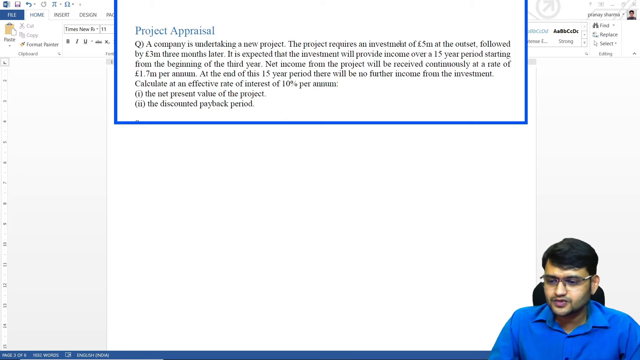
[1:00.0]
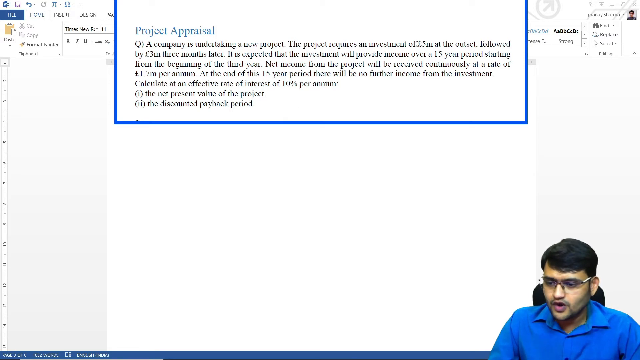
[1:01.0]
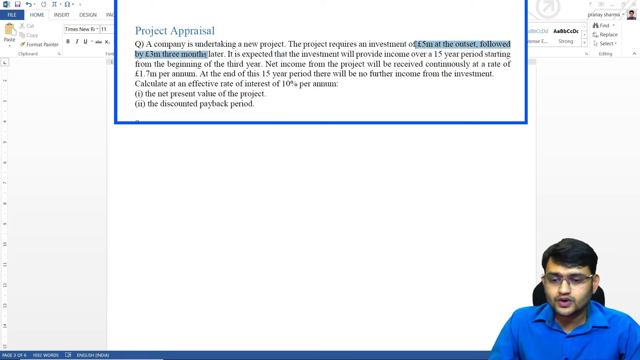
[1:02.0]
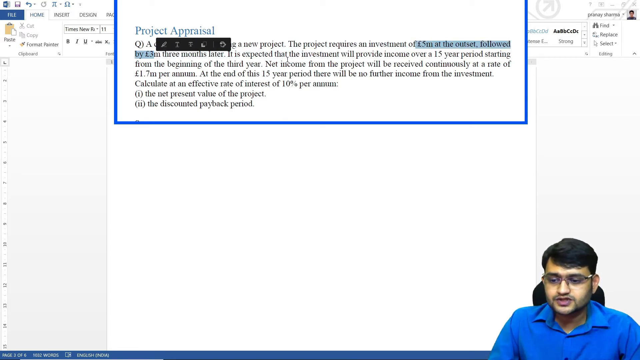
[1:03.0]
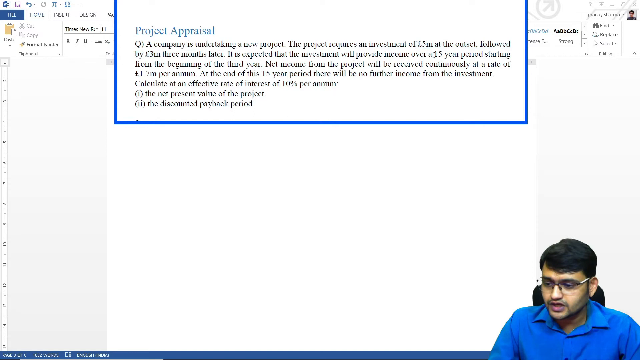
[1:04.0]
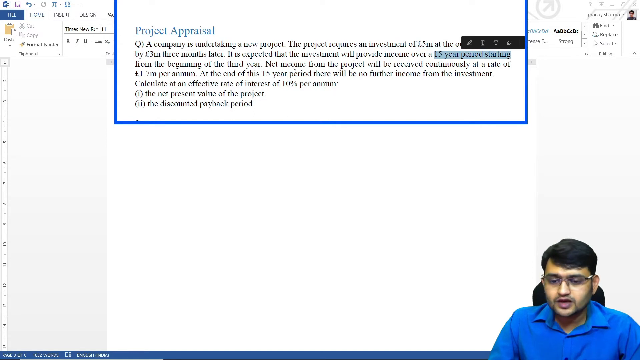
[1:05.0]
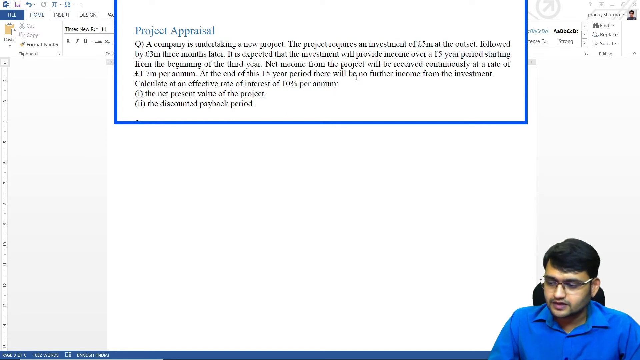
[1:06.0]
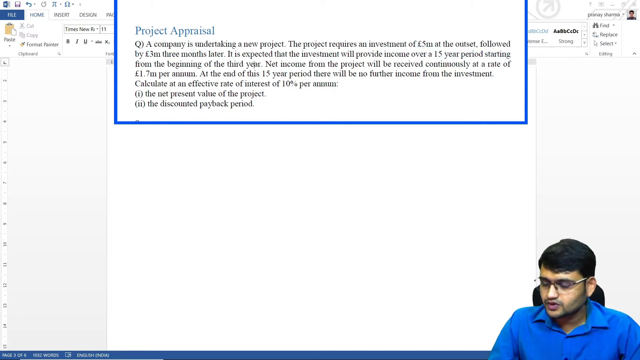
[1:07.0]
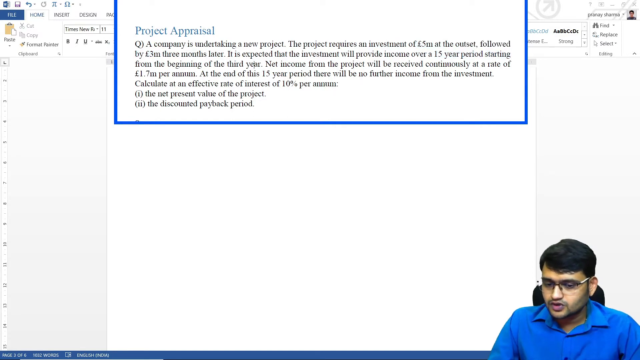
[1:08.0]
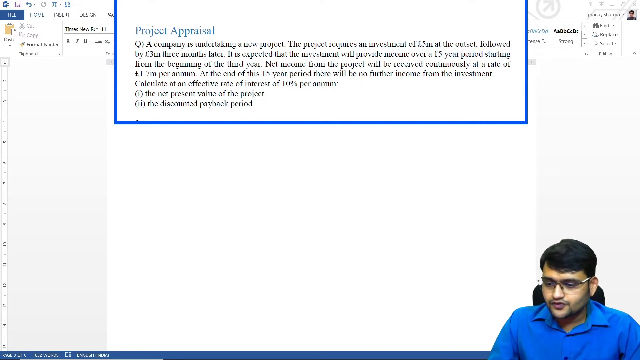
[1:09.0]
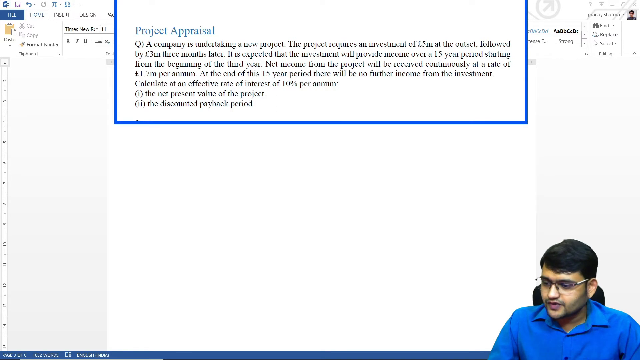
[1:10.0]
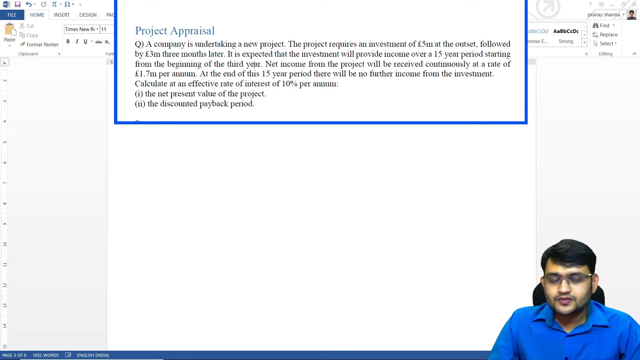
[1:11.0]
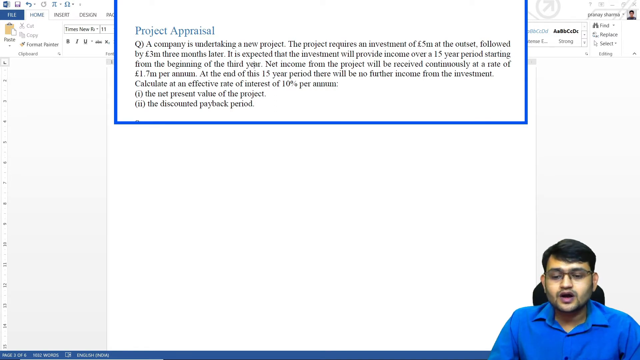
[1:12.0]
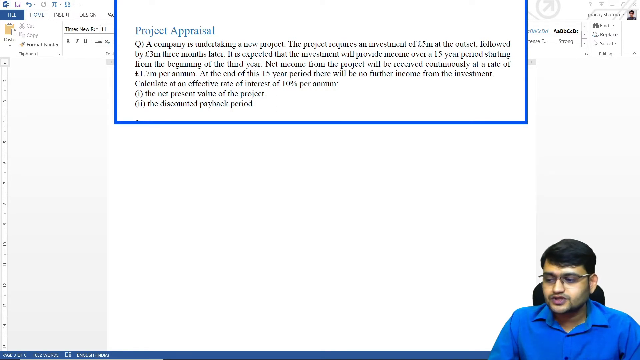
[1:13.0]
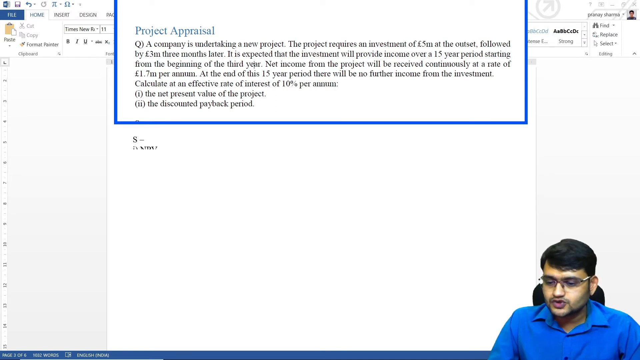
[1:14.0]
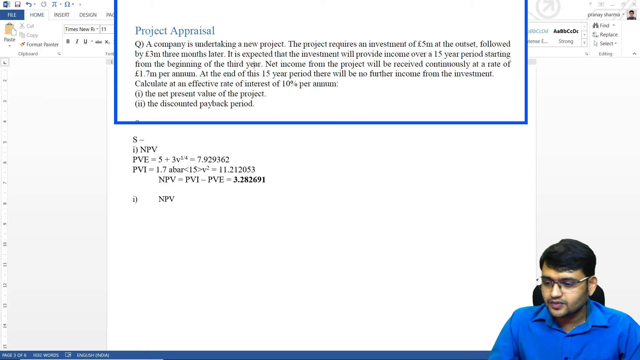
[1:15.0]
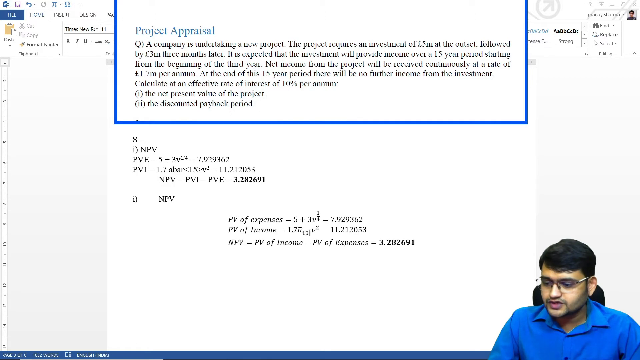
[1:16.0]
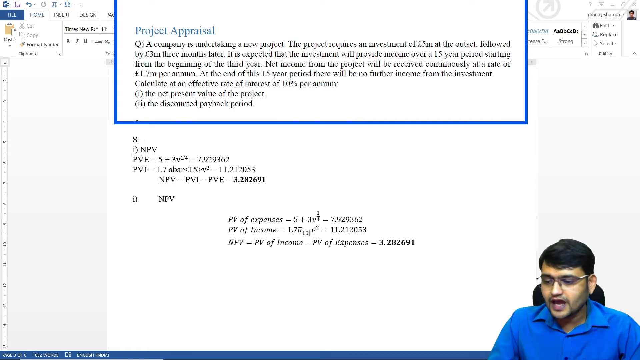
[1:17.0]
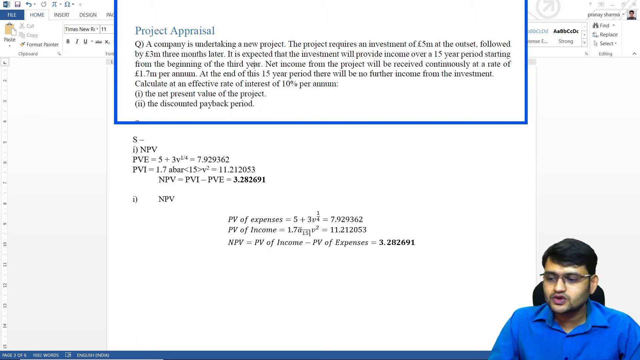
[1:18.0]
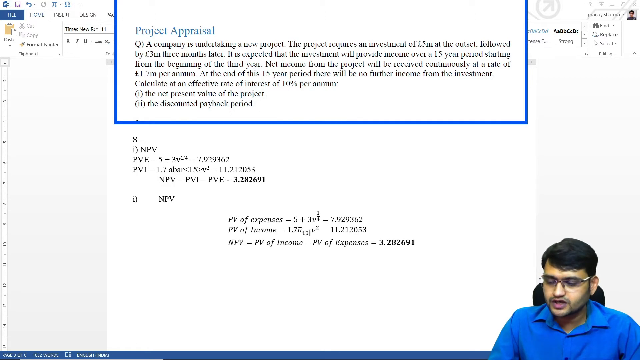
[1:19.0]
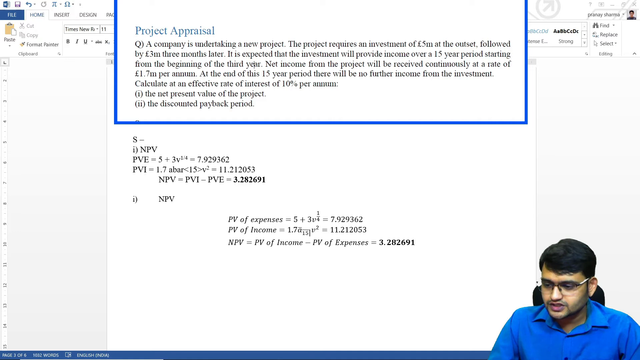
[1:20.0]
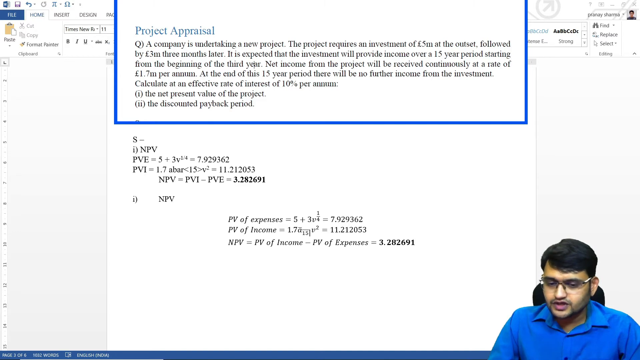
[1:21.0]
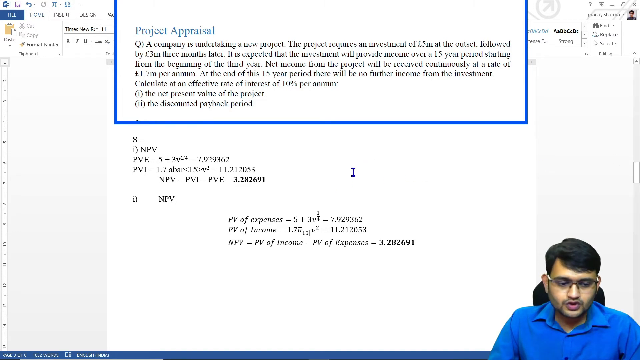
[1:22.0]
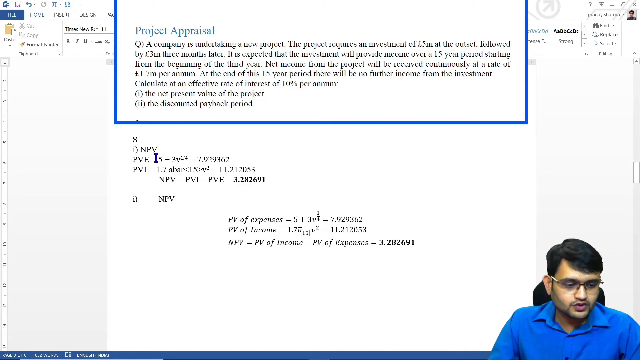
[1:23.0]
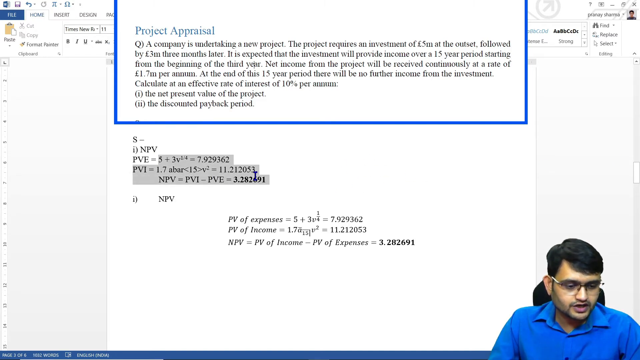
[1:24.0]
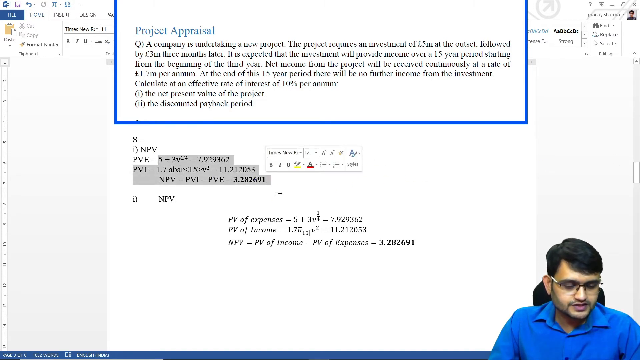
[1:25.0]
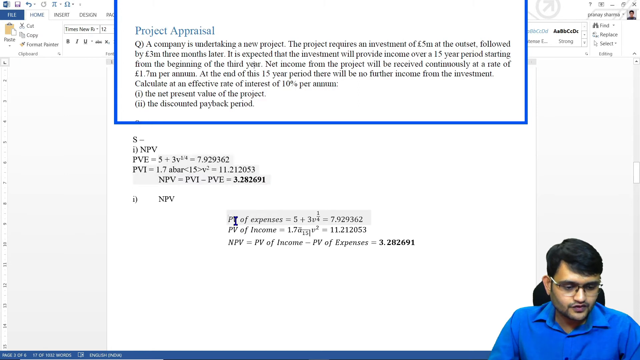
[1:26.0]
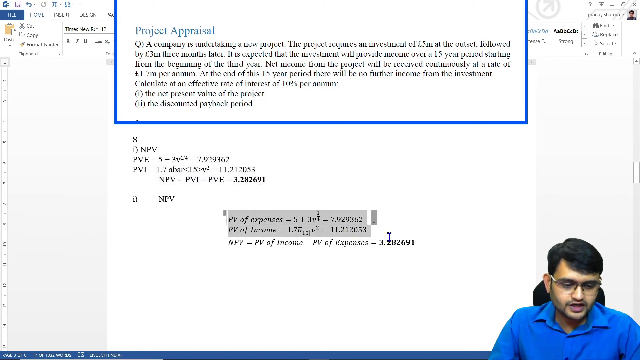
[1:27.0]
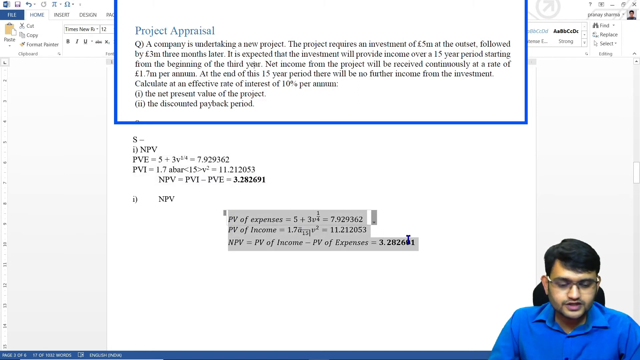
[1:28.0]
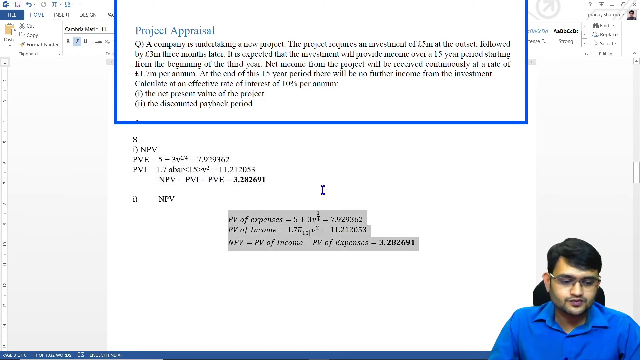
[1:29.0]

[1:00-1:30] The man moves his cursor back to the beginning of the paragraph and highlights the text "5m pounds at the outset, followed by 3m pounds three months later" in blue. A black rectangle appears above the end of the highlighted portion with options: edit, shown as a pencil icon, then two T symbols, a small arrow pointing down and to the left, and at the very end a circular refresh or undo arrow. He then highlights "a 15 year period", and the black rectangle briefly appears above it. He moves the cursor off and continues to speak. Beneath the blue rectangle, text quickly appears: a line labelled NPV, then "PVE = 5 + 3V to the 1/4 = 7.929362", under that "PVI = 1.7 abar <15> V to the 2 = 11.212053", and under that "NPV = PVI - PVE = 3.282691". Below this appears "i) NPV", and down and to the right, in italics, "PV of expenses = 5 + 3V to the 1/4 = 7.929362" and "PV of income = 1.7" followed by an unidentified symbol and "= 11.212053". Under that, in bold, is "NPV = PV of income - PV of expenses = 3.282691". The man continues to speak, moving his cursor above and highlighting different portions of the equations.